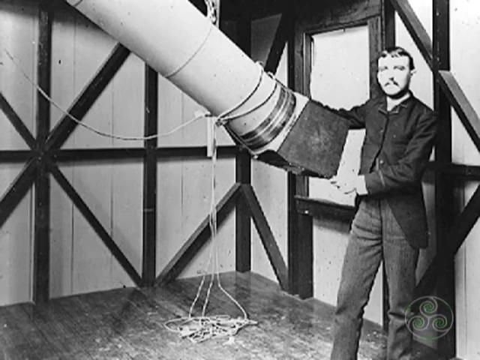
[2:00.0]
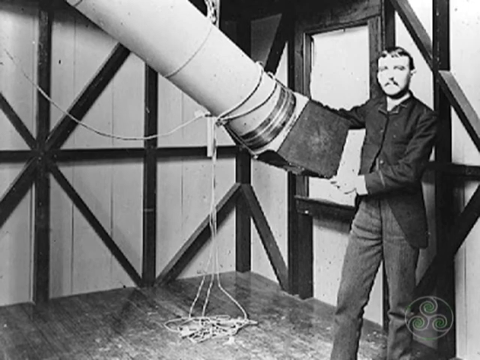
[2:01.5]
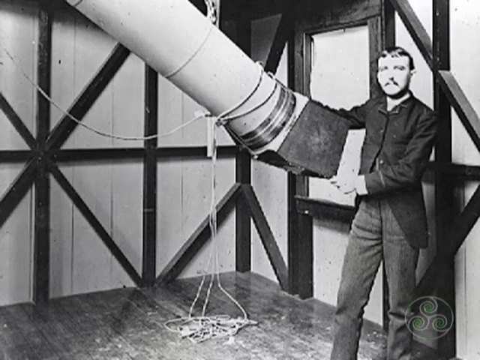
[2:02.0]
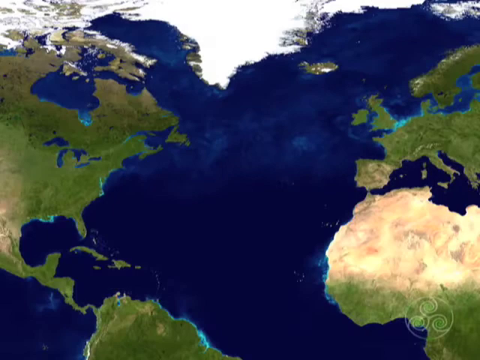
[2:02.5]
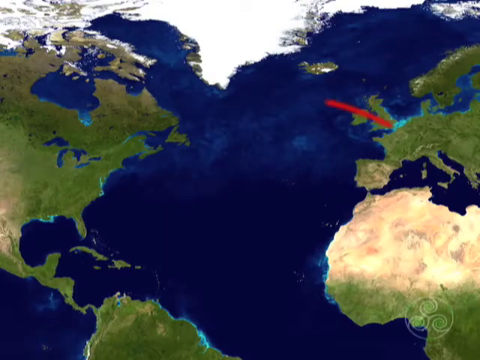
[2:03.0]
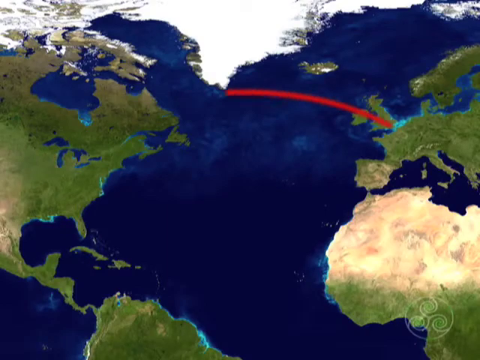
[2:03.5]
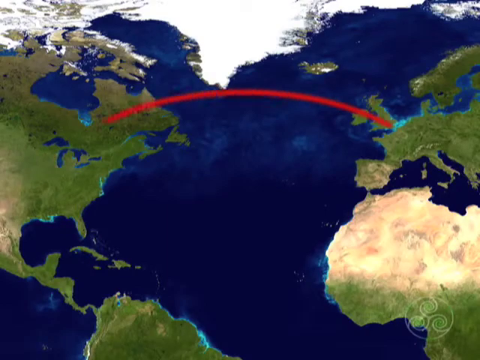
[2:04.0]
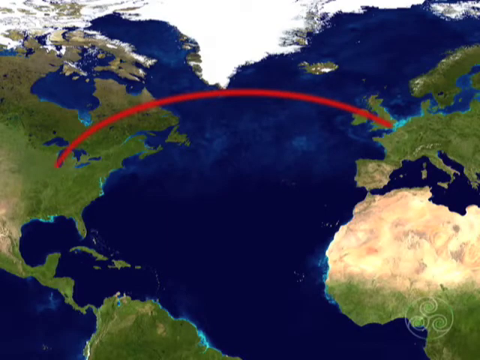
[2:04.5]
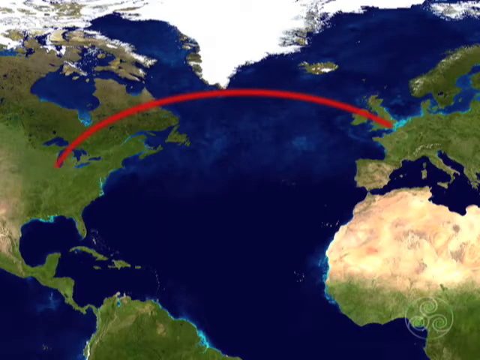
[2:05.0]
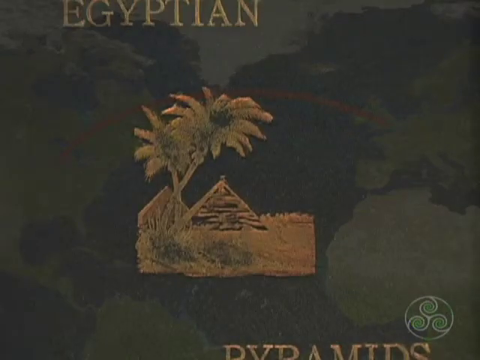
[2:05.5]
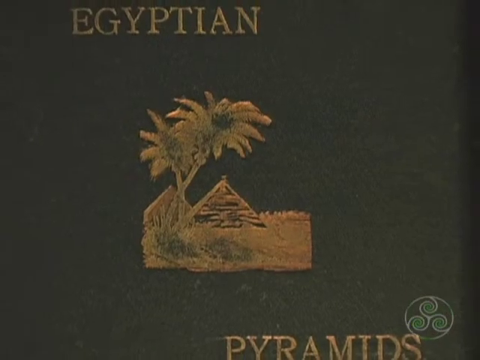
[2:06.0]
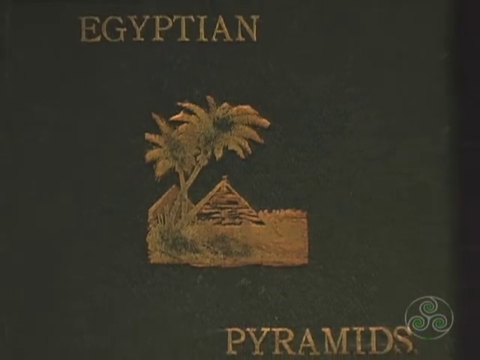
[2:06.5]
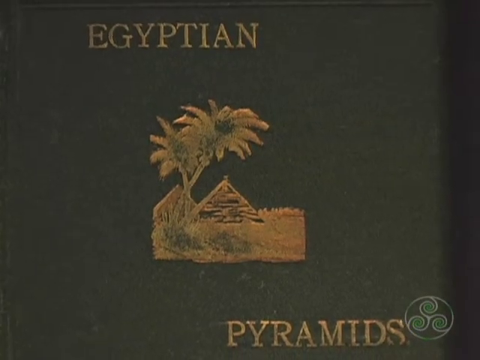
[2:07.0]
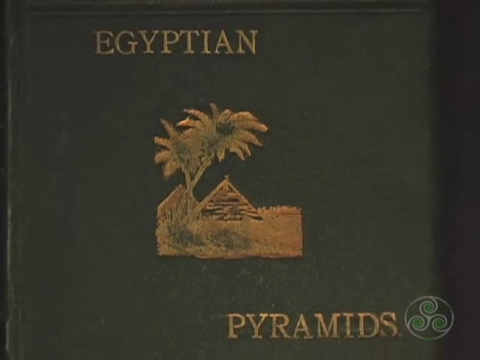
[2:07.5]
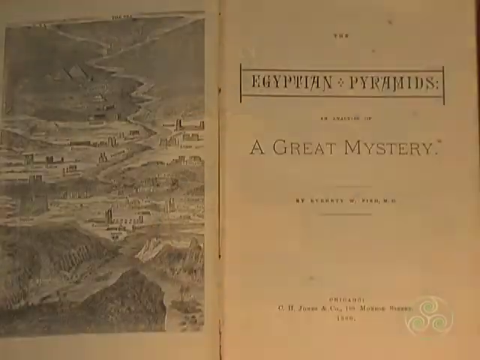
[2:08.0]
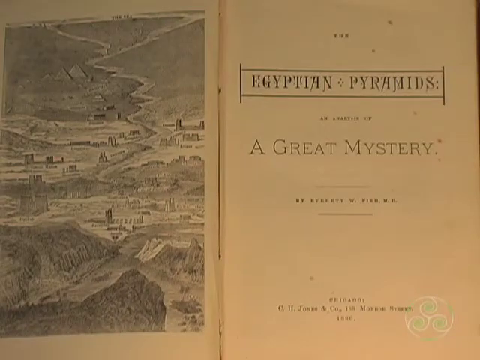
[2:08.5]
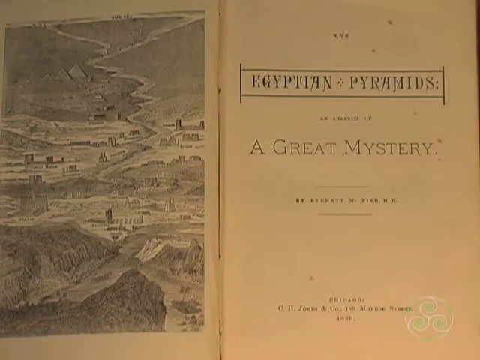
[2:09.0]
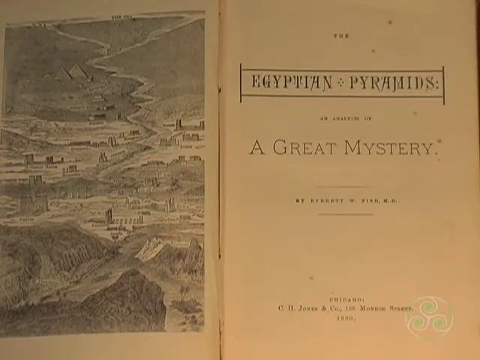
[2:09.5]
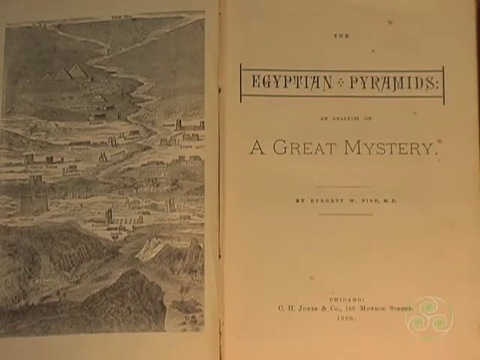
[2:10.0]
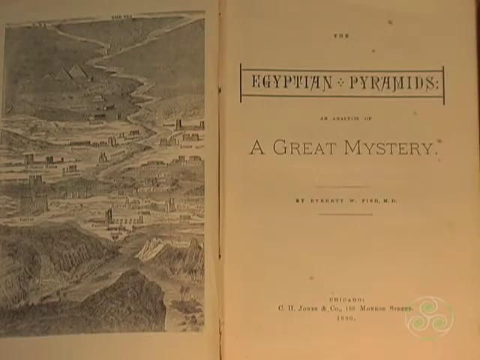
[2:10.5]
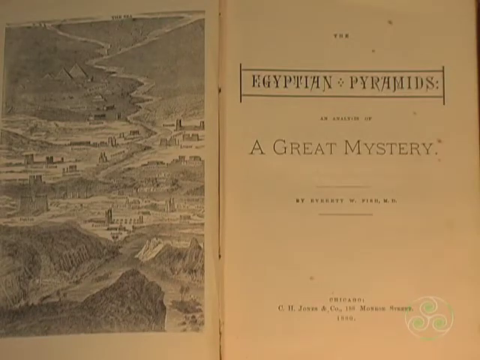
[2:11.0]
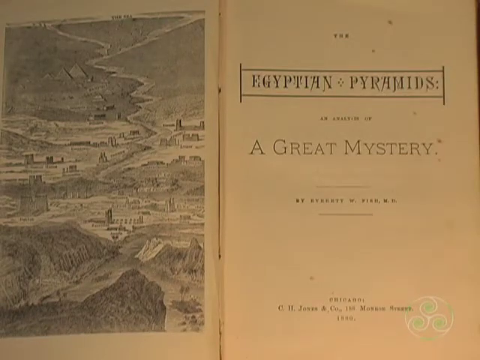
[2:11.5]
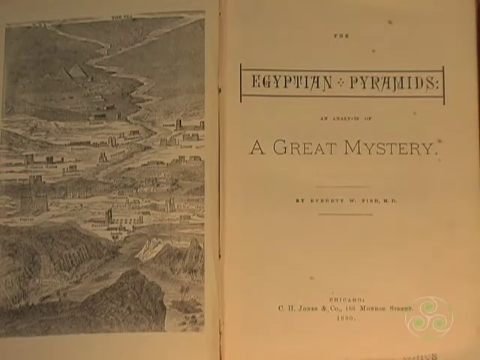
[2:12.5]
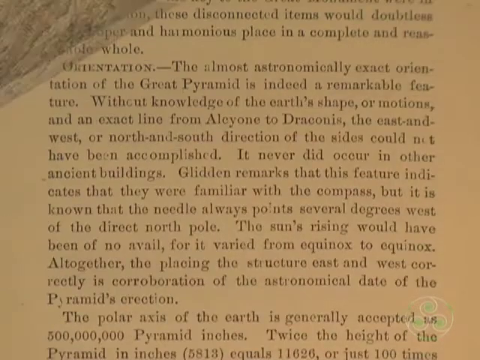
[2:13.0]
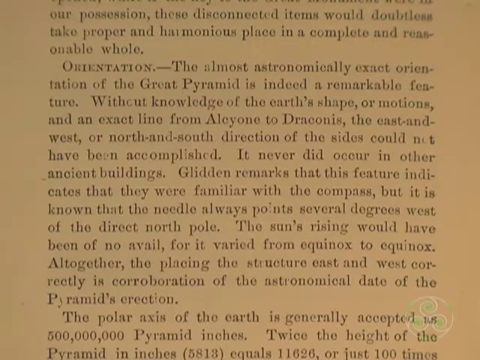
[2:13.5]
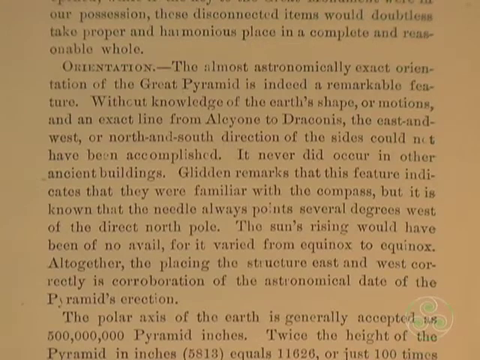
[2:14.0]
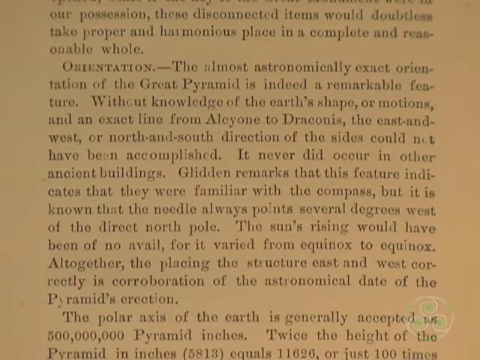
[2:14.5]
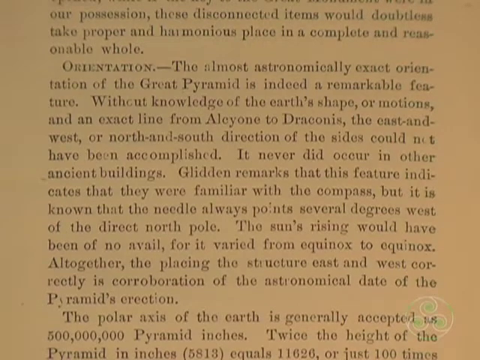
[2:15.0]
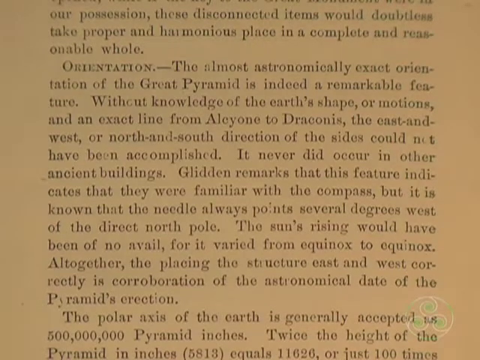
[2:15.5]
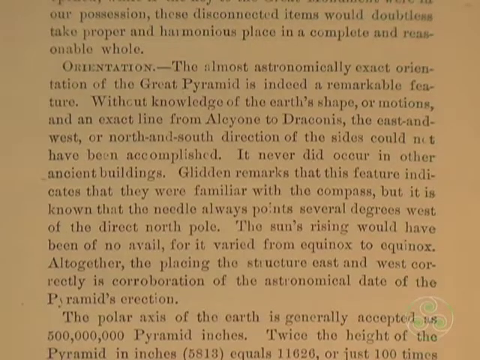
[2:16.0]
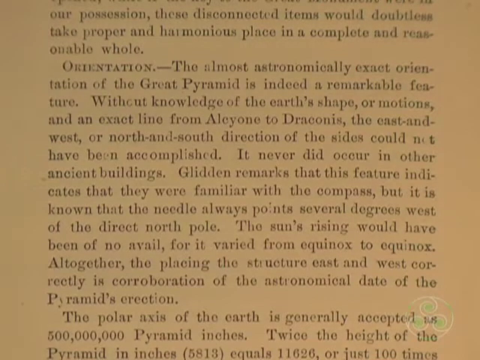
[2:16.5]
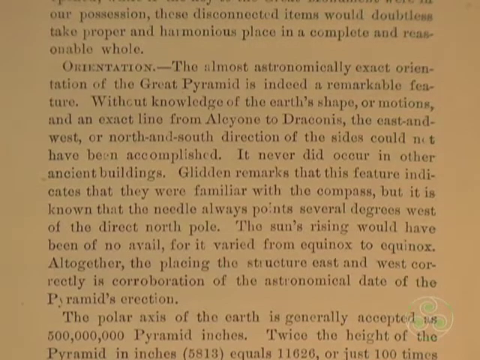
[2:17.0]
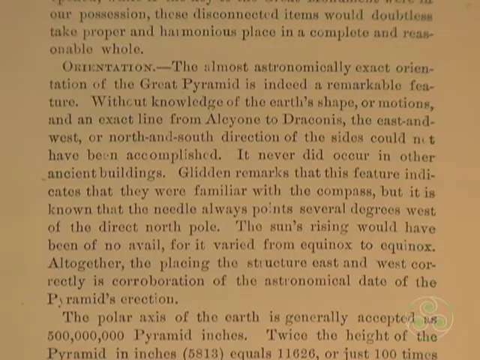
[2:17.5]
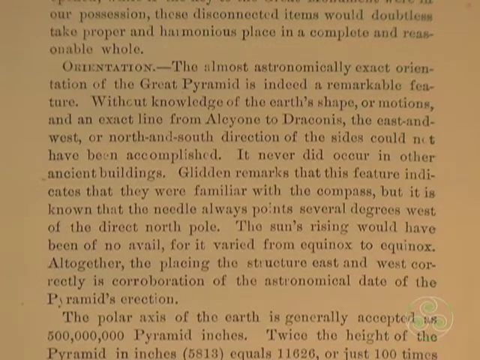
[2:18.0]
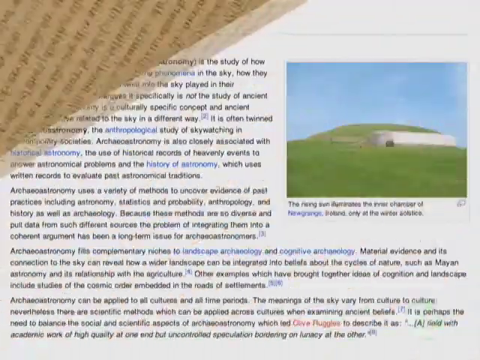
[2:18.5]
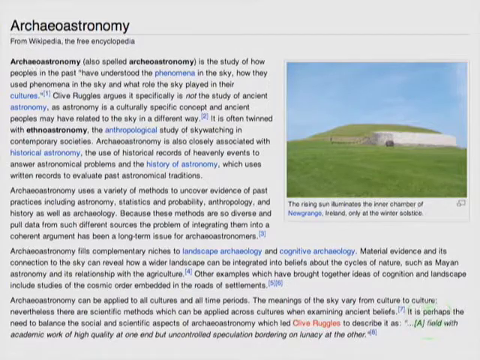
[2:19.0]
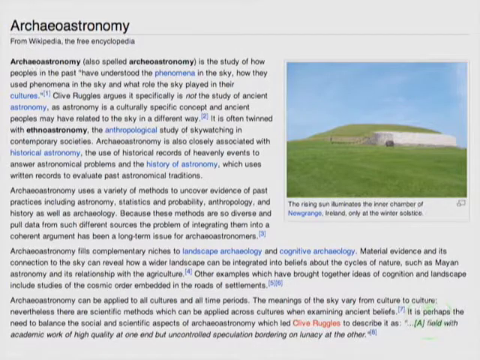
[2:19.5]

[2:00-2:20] A map shows a long, curved path from the UK to the Americas. A book page is shown on the screen, followed by a page about "archaeoastronomy". A man working on a telescope is shown in contrast with the archaeoastronomy text.